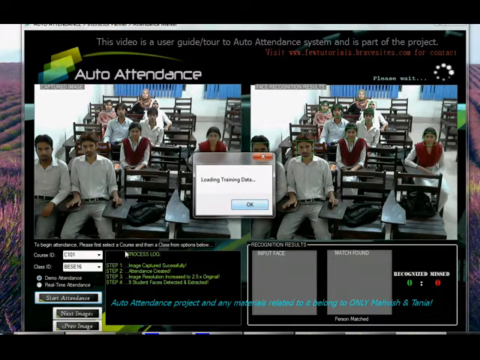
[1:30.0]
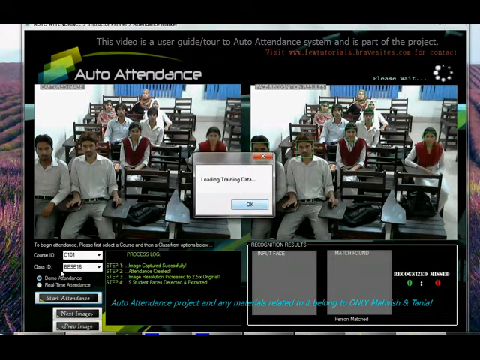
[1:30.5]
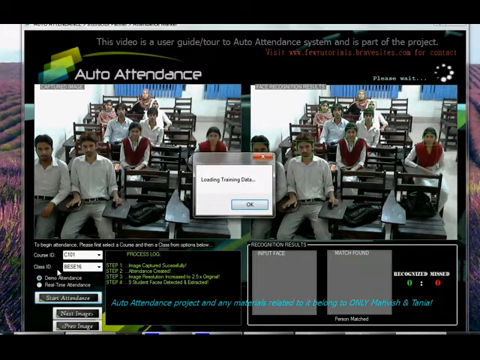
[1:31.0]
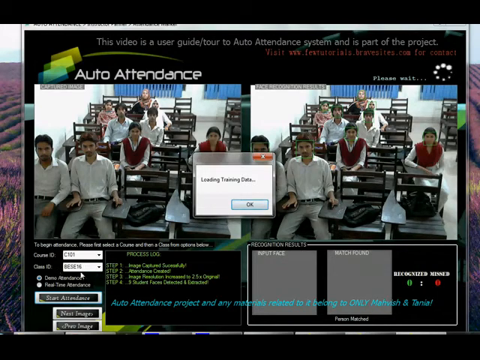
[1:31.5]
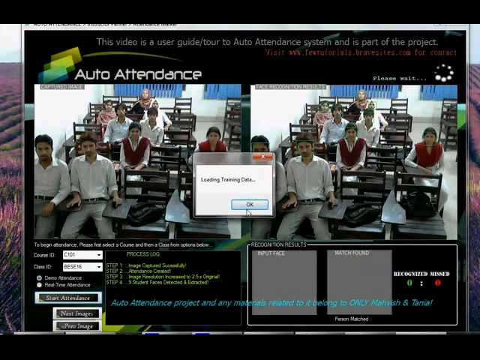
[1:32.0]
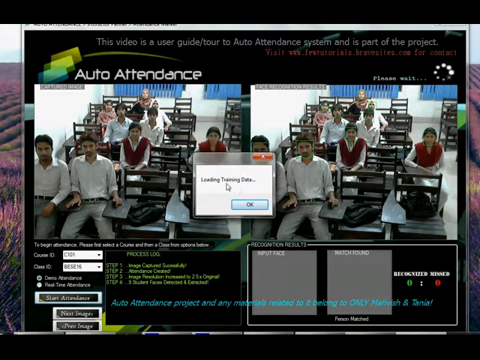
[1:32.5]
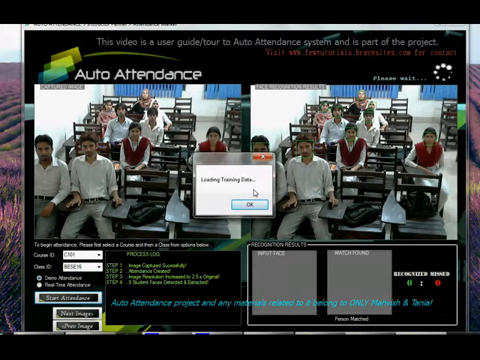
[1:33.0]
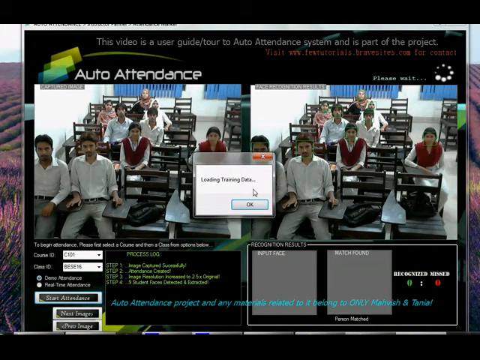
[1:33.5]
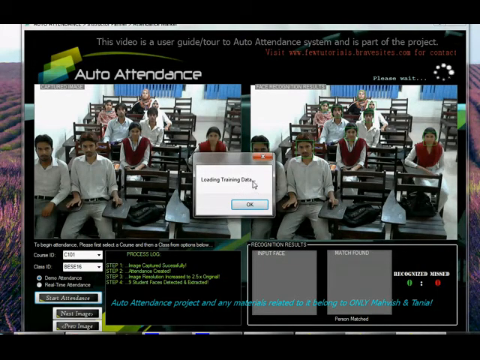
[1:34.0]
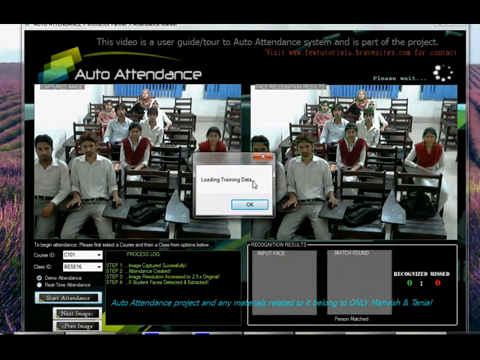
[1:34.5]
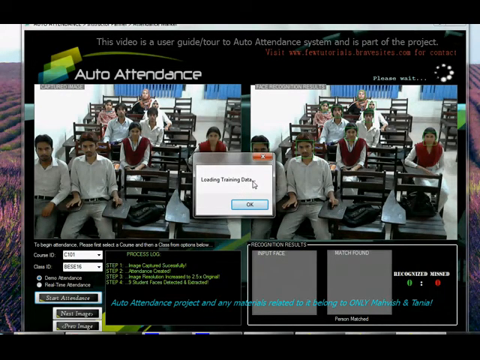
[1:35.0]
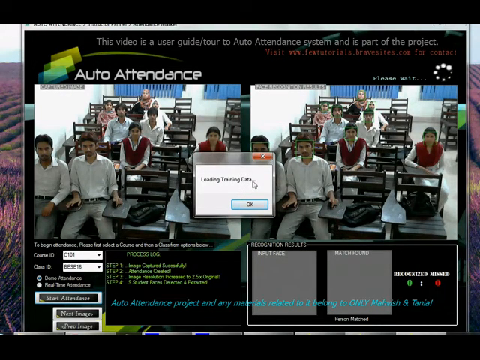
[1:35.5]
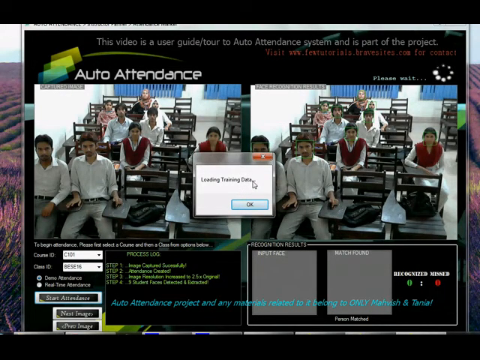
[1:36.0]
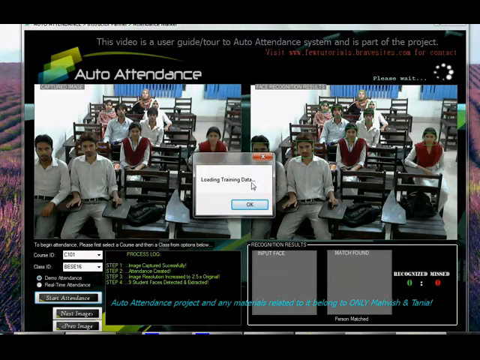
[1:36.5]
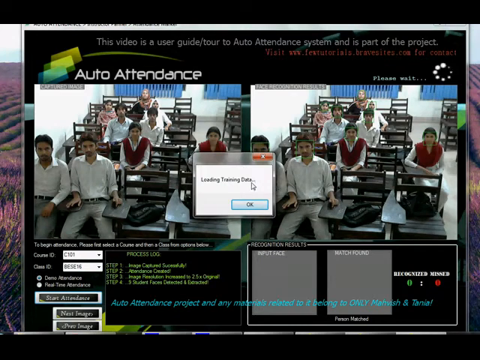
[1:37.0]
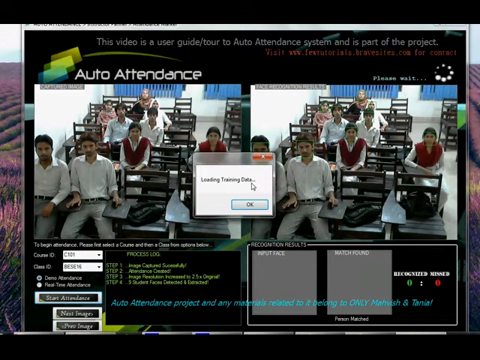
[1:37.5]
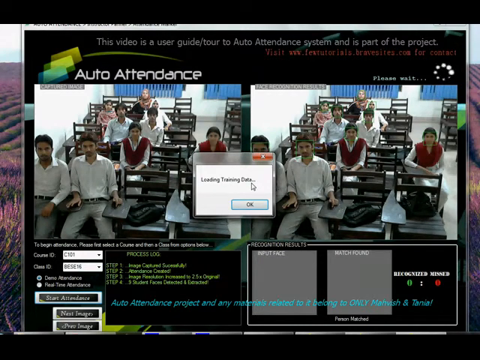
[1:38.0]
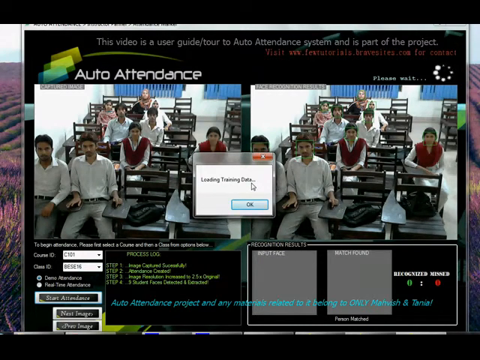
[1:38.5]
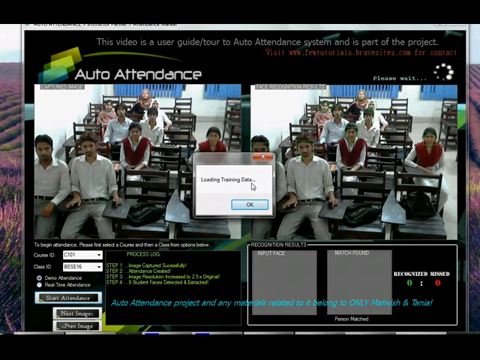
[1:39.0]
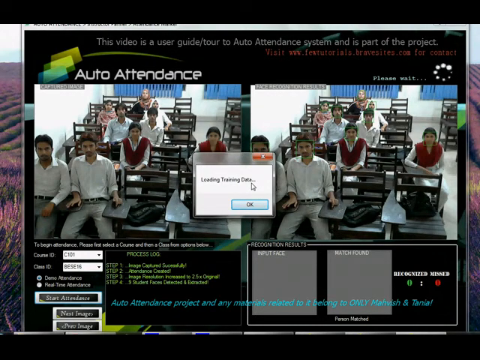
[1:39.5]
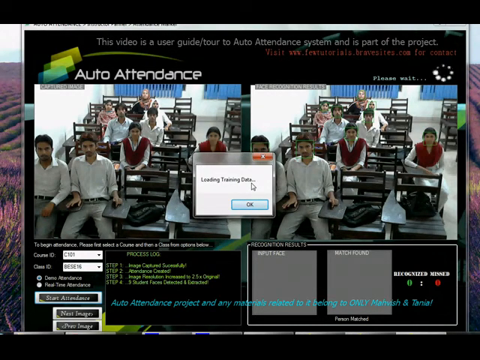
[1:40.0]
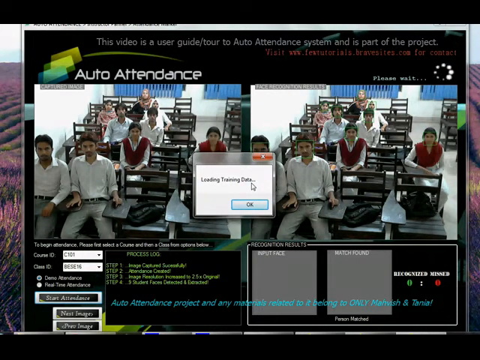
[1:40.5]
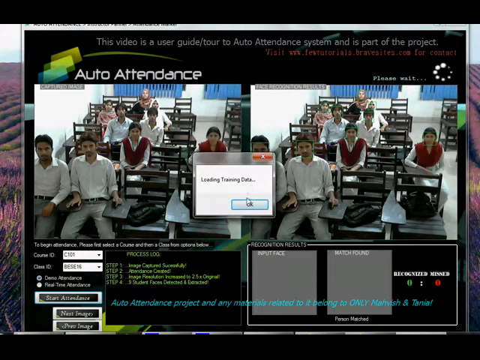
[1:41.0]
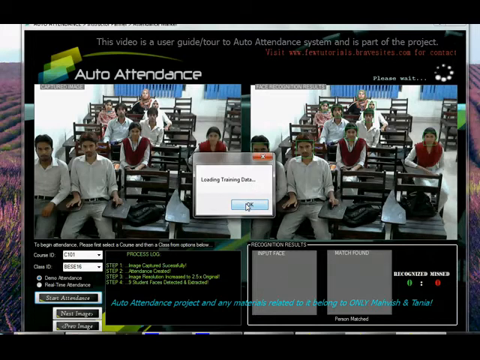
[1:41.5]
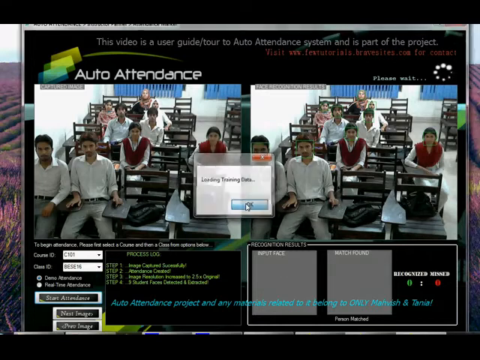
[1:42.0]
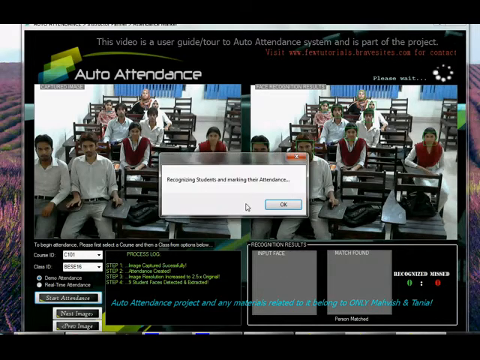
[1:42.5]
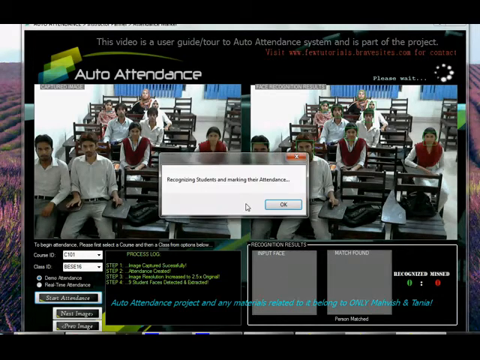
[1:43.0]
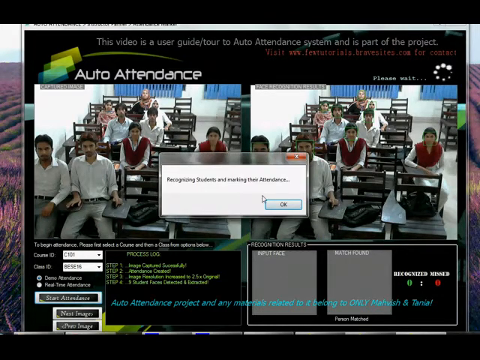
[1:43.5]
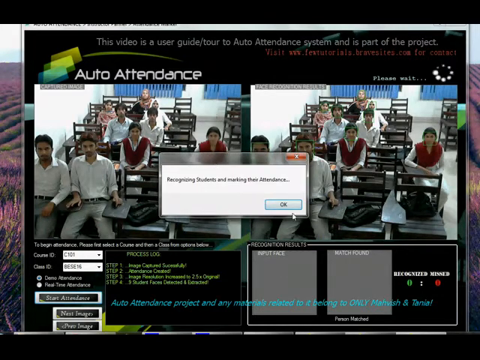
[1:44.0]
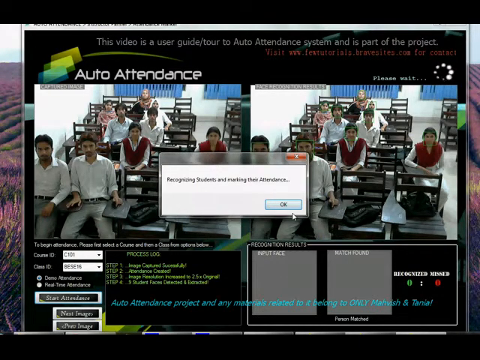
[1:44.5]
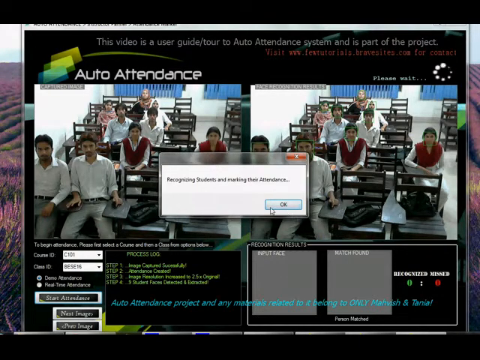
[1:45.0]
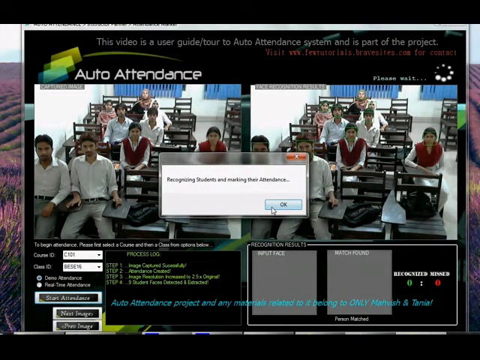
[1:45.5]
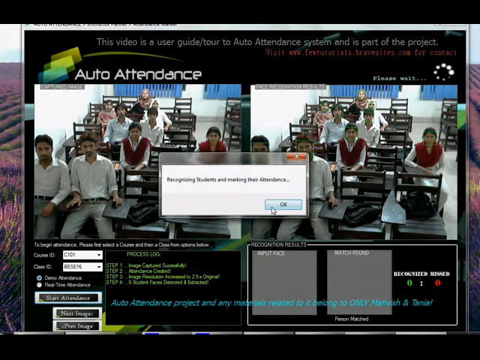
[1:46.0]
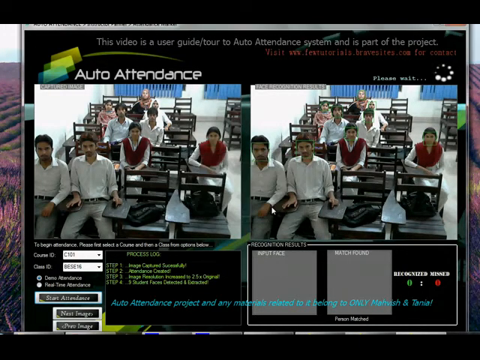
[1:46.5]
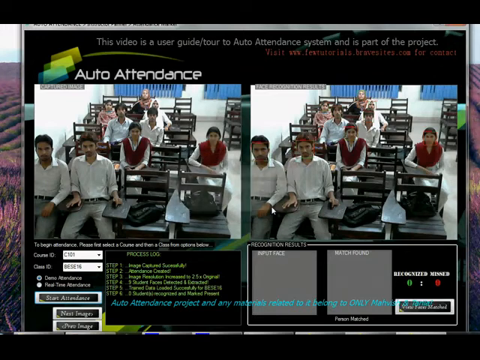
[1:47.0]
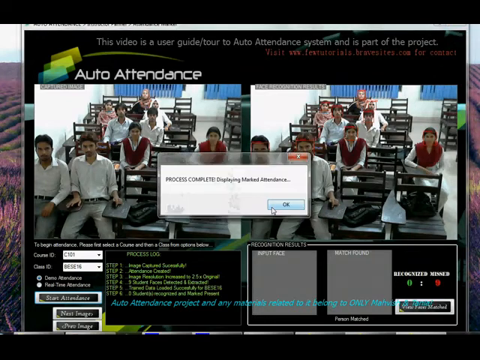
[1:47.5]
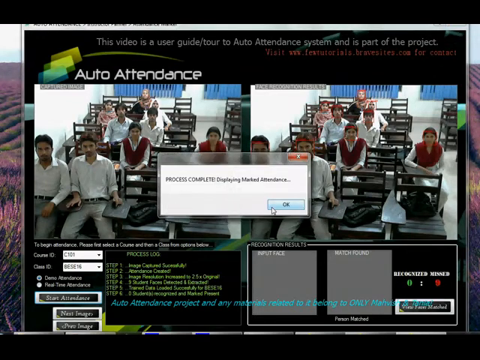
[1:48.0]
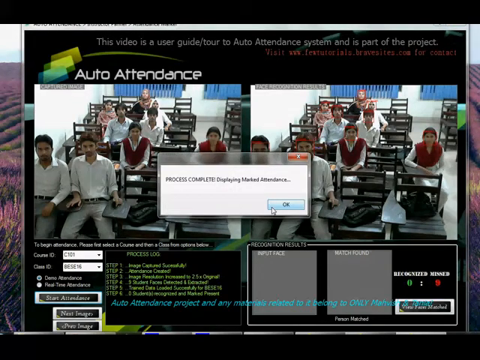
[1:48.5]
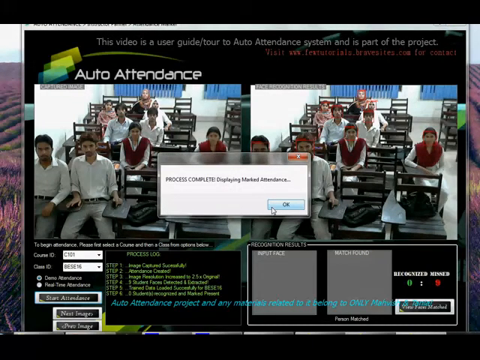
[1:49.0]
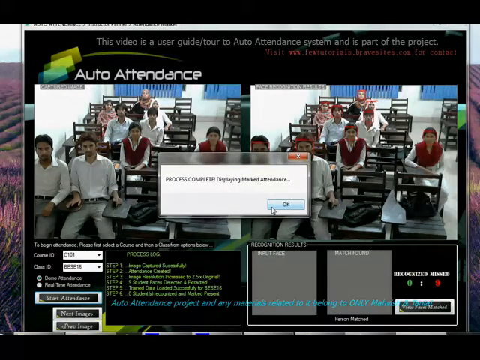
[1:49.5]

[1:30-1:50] Training data appears to be loading. Two similar screens of the same people are side by side, and a circle is spinning near the top beside the attendance area as face data seems to load. Text reads "recognizing students and marking their attendance." A pop-up then appears saying "process complete," with the option to click OK or close it. The same people are in each picture, and everything looks the same. He seems to change some parameters, clicking through quickly.